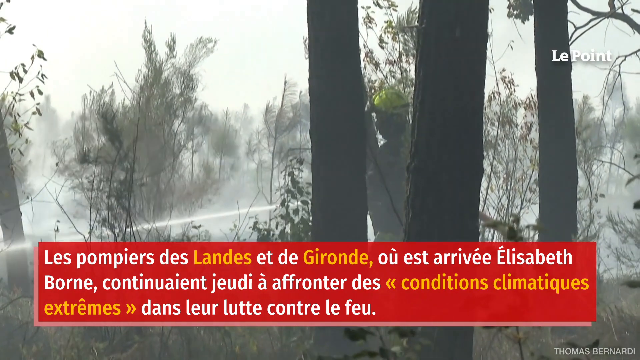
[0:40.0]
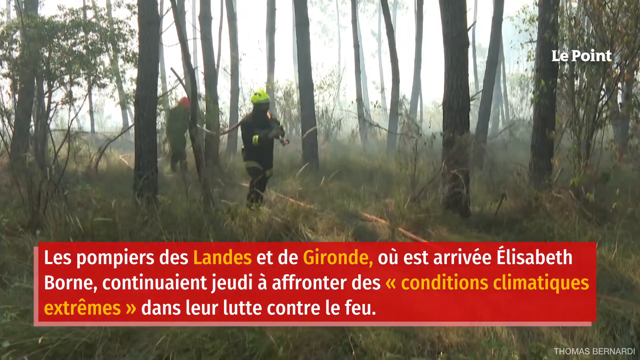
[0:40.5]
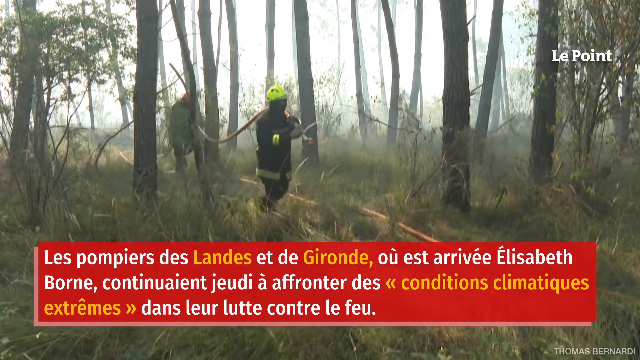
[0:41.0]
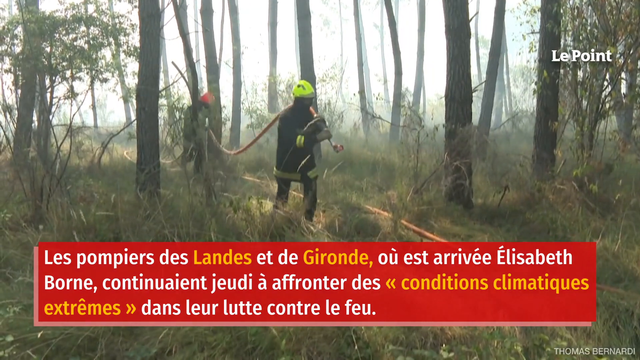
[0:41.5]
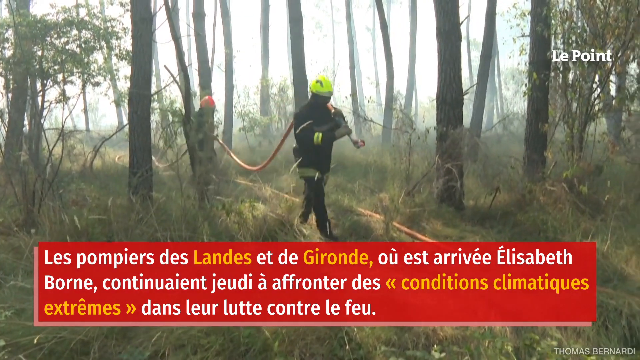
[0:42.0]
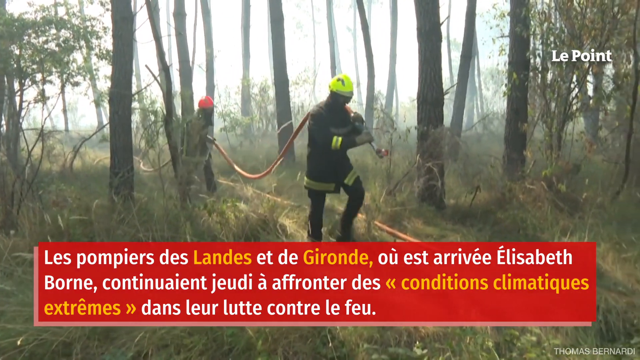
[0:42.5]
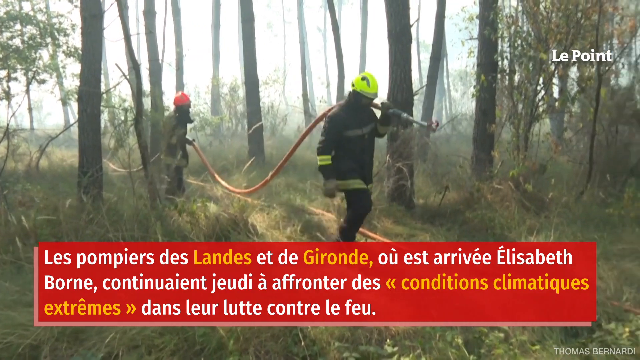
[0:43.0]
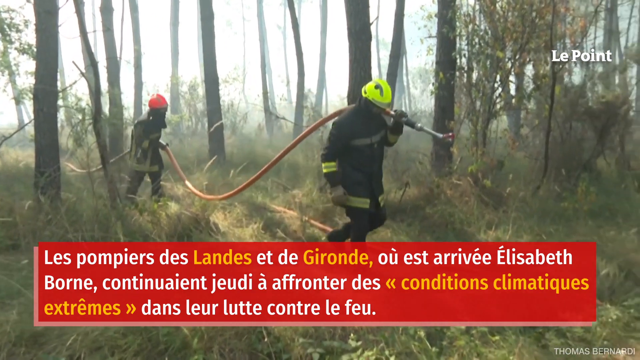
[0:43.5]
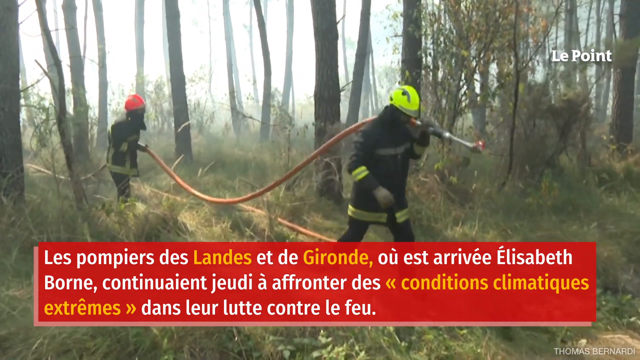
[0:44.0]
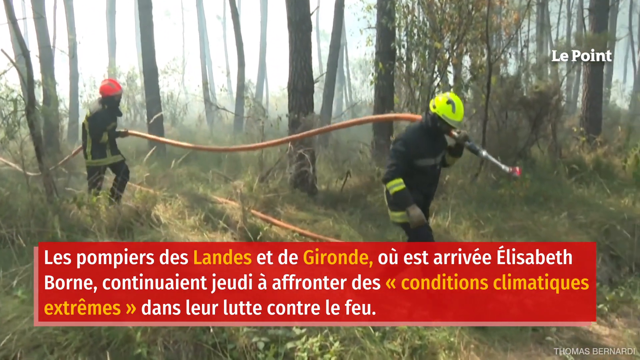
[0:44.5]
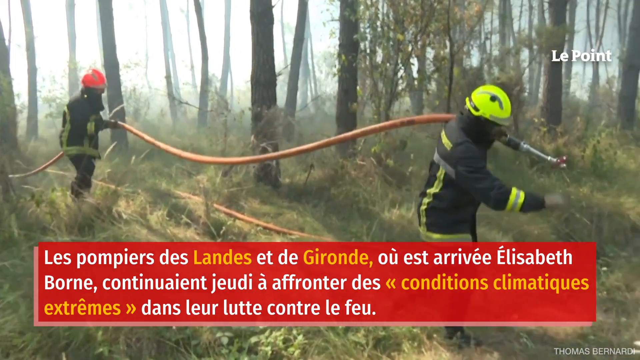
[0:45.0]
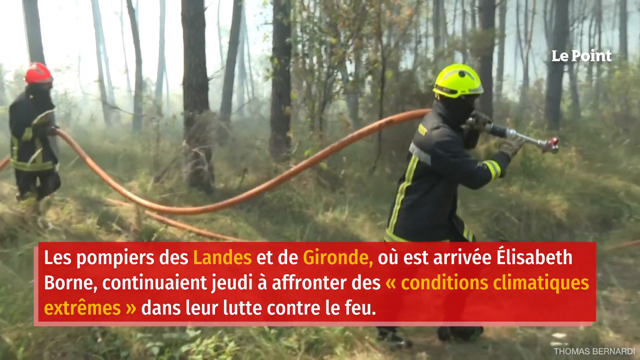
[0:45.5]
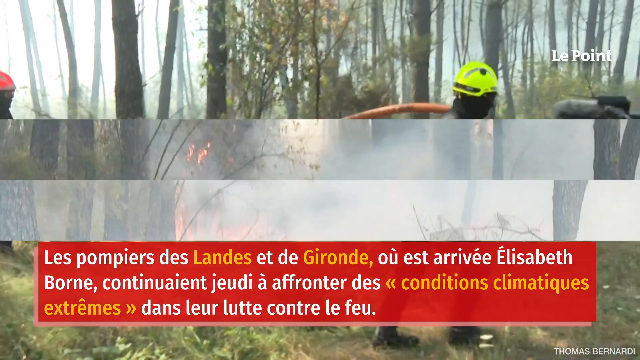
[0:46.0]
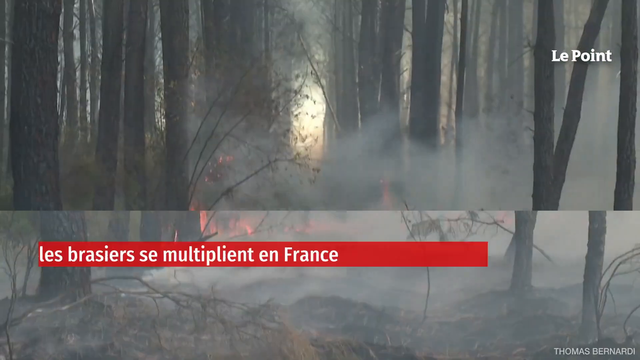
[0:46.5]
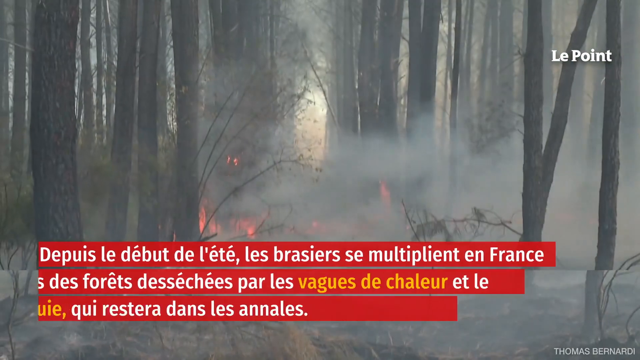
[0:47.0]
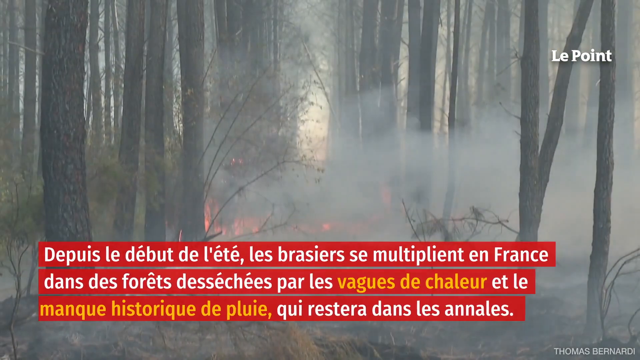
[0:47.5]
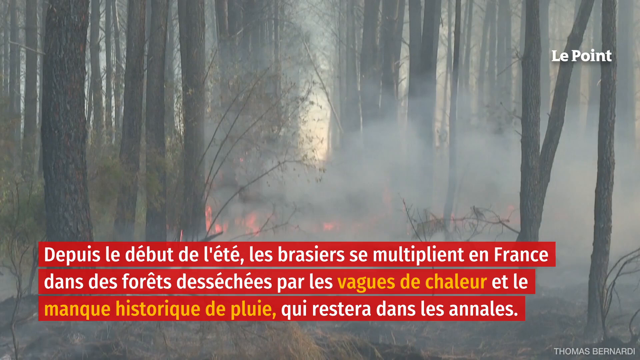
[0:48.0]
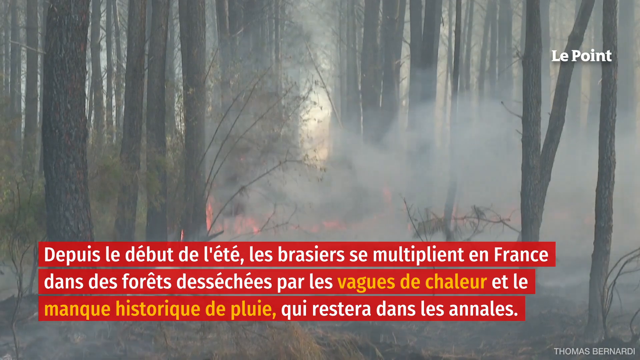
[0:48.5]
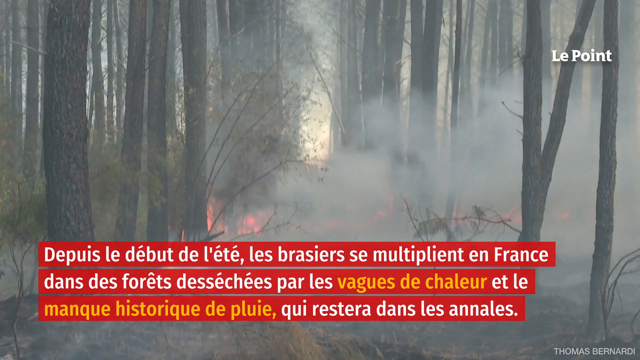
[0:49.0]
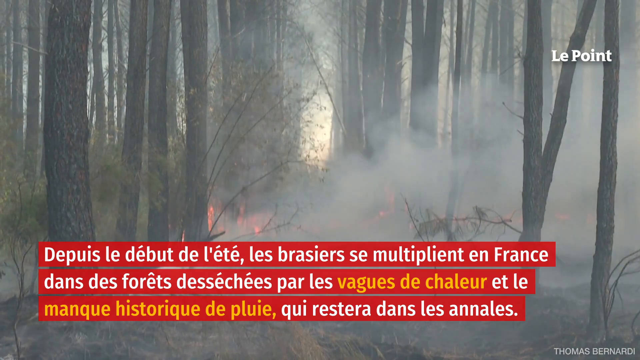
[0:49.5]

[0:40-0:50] The Le Point coverage continues with two fully suited firefighters walking through an outdoor forest area, carrying a large red hose. Next is a shot of fire burning in the forest area, with a red text box at the bottom of the screen containing French text. The coverage then cuts to a single firefighter wearing a yellow fire hat, actively spraying water onto an outside forest area, apparently trying to put out the fire.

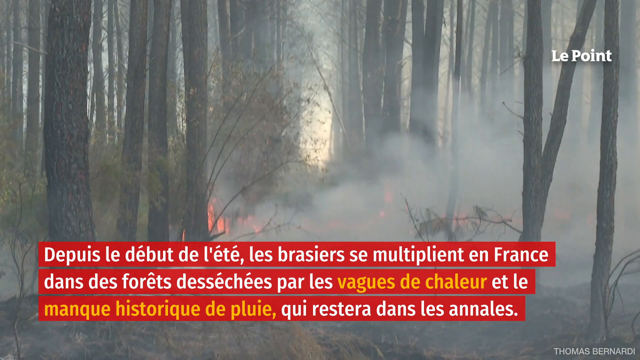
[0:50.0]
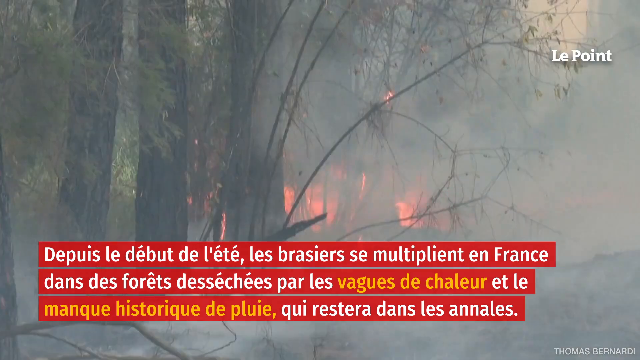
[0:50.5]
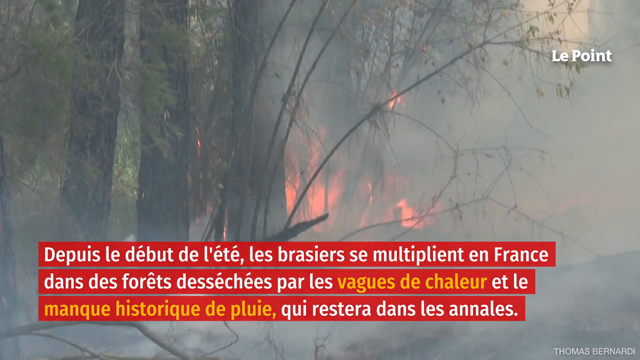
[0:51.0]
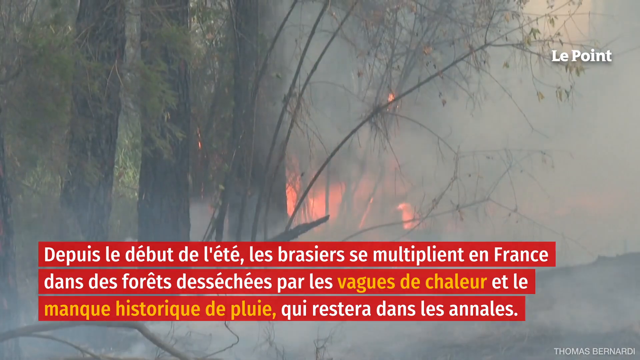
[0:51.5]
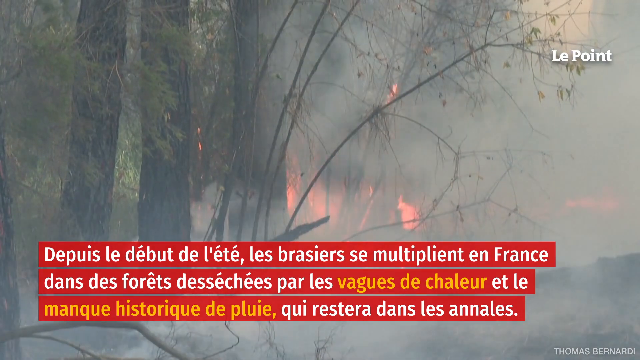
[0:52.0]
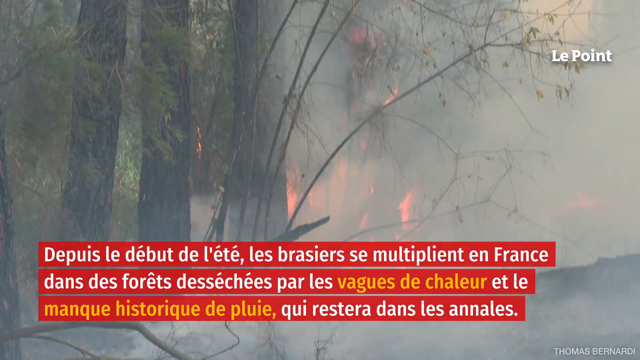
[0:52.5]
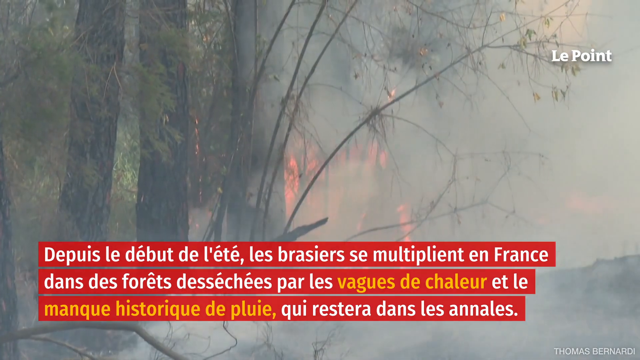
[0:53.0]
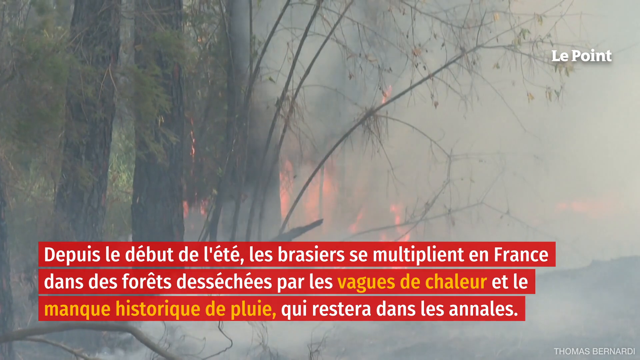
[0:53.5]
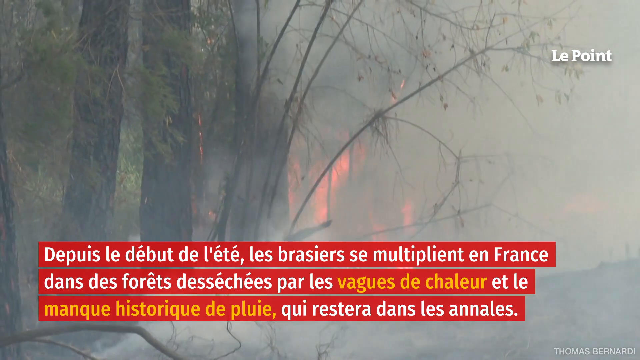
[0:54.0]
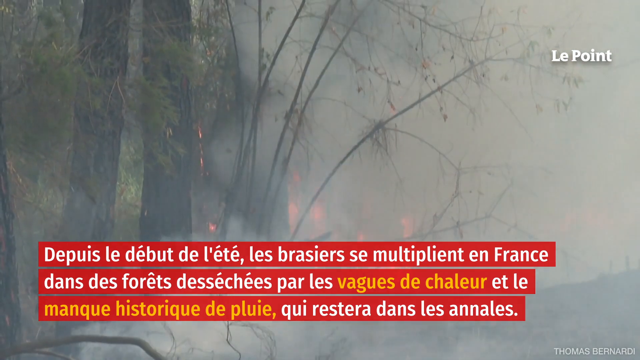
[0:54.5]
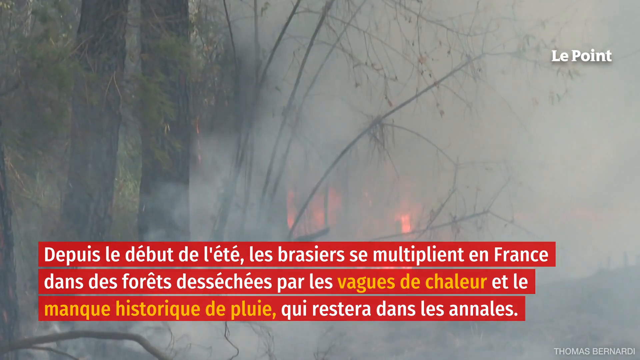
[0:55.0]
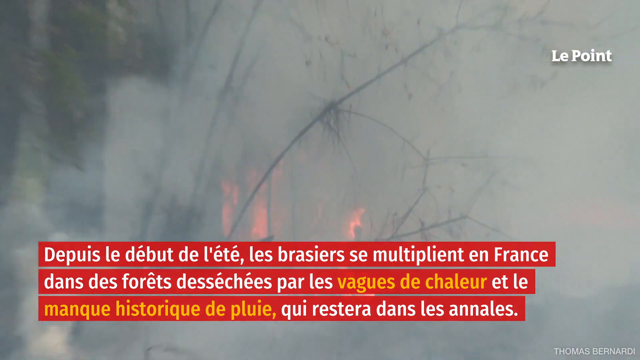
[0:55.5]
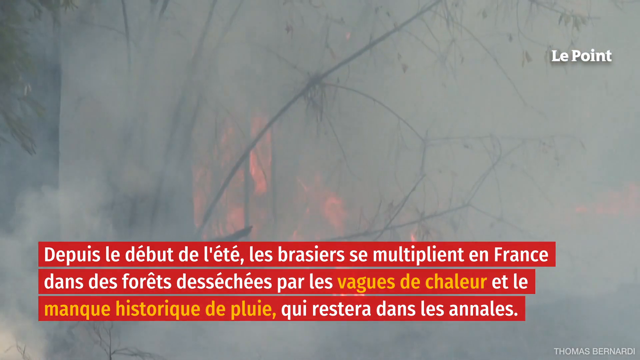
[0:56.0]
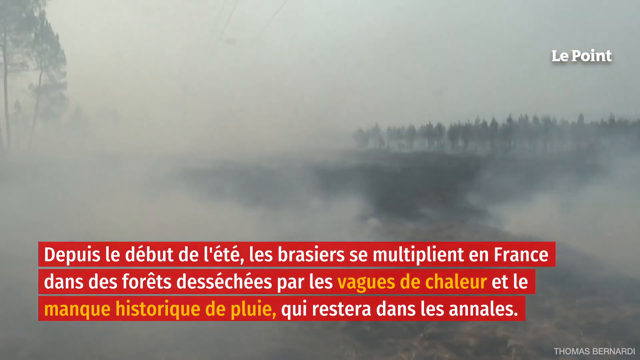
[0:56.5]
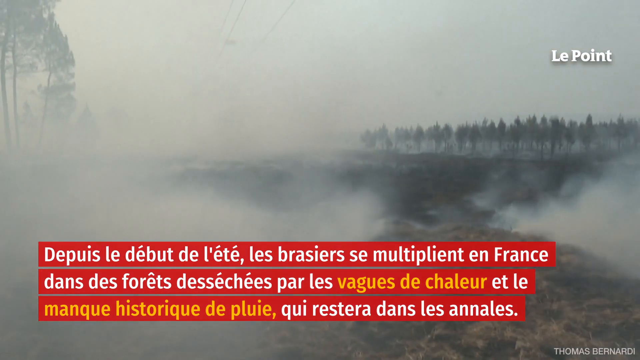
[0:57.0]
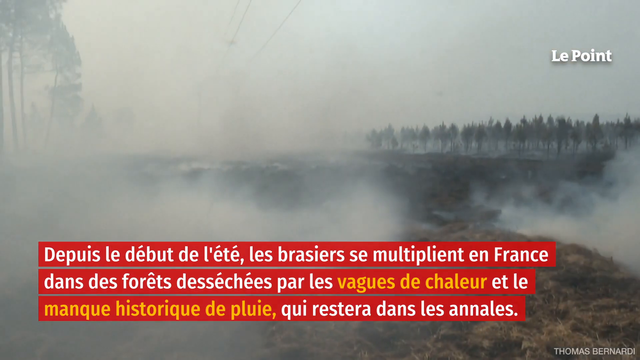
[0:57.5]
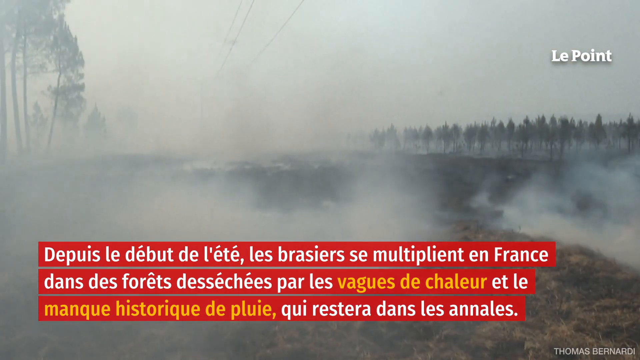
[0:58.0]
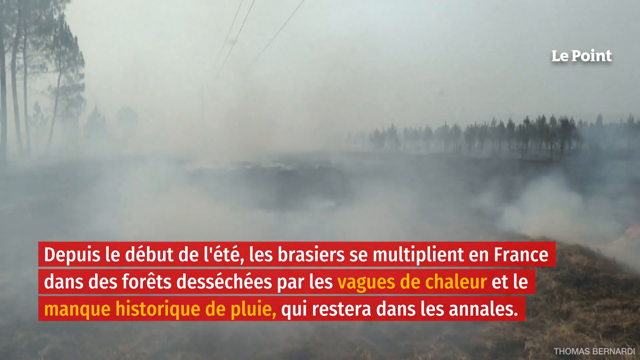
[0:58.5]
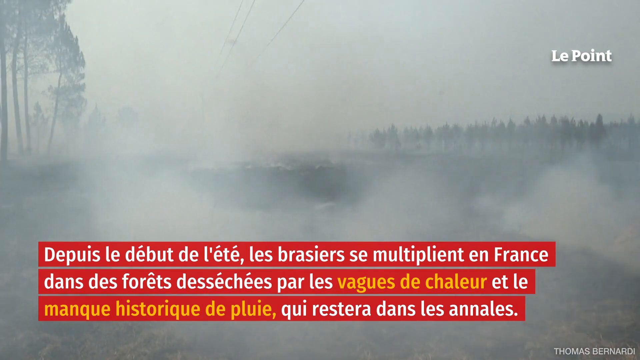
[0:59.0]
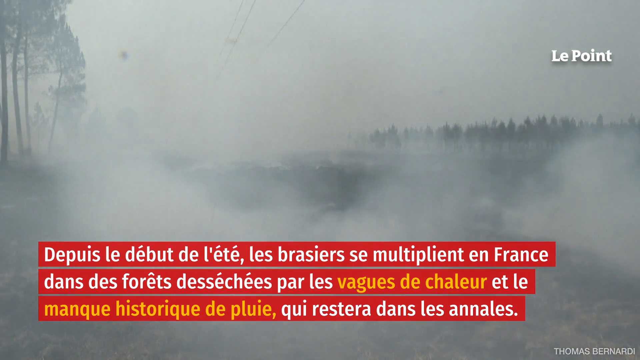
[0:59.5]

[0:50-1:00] The Le Point news coverage continues with several short videos compiled together showing the fire in action. It appears to cover a large amount of forest area, actively flaming and apparently causing a lot of damage. The fire has large flames and appears to be out of control, likely an emergency situation. A text box at the bottom is red with white lettering, with a few words highlighted in yellow; the text is in French.